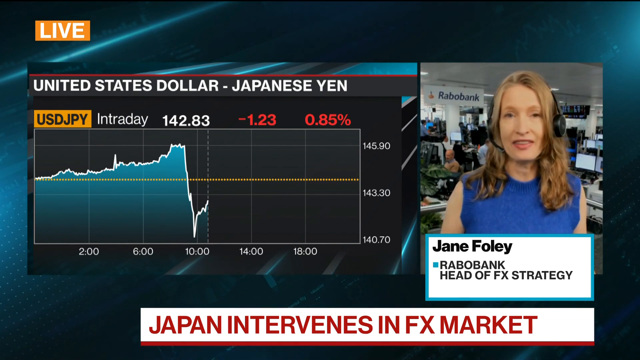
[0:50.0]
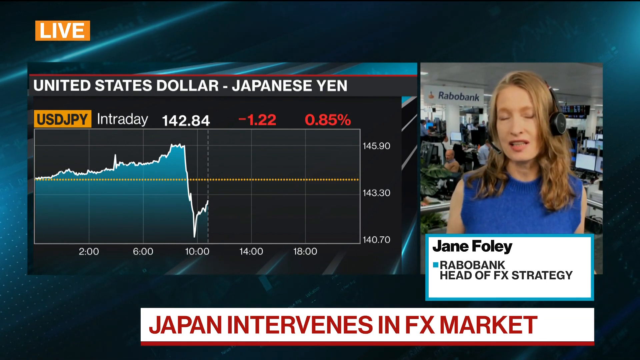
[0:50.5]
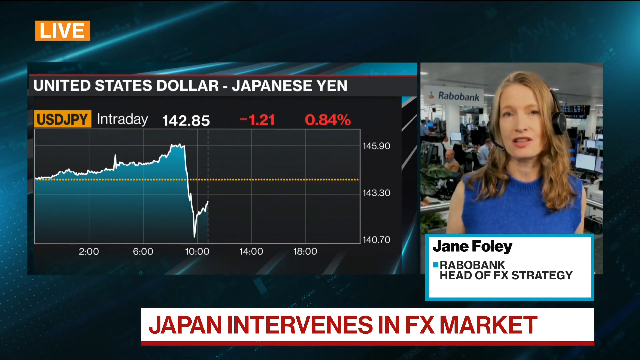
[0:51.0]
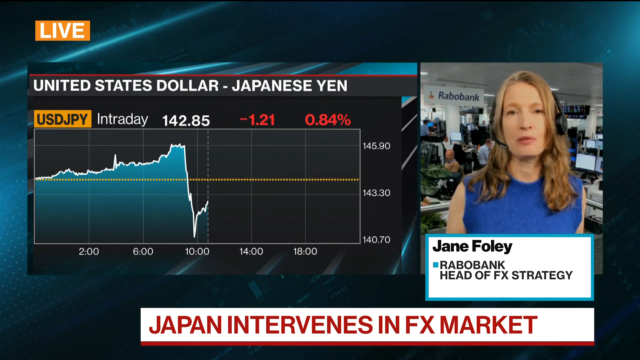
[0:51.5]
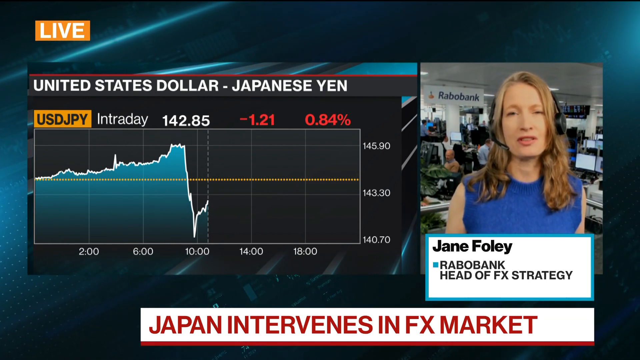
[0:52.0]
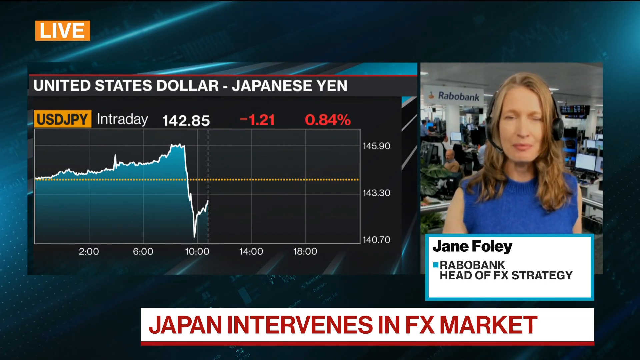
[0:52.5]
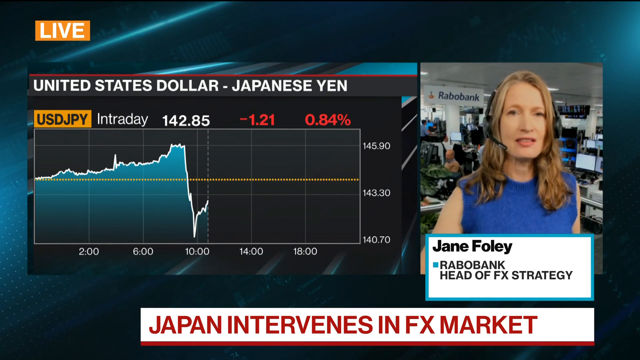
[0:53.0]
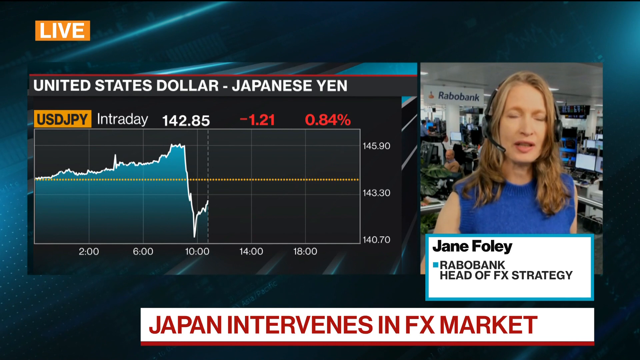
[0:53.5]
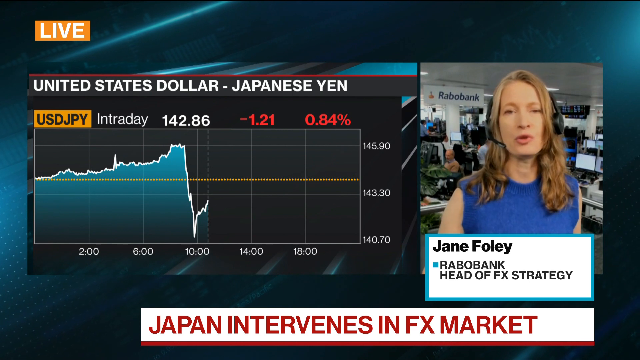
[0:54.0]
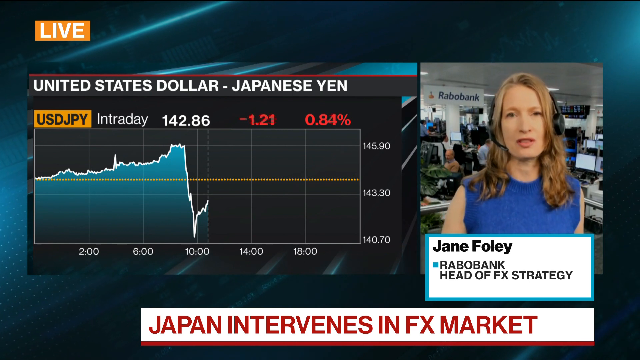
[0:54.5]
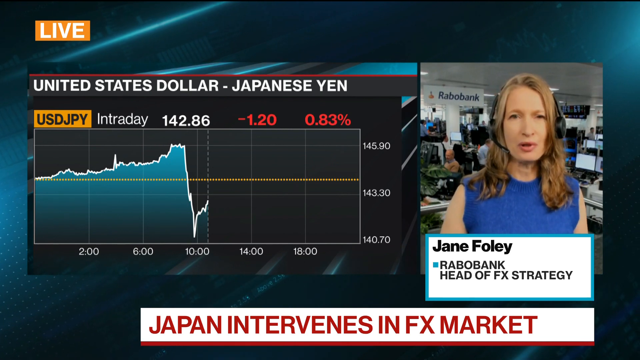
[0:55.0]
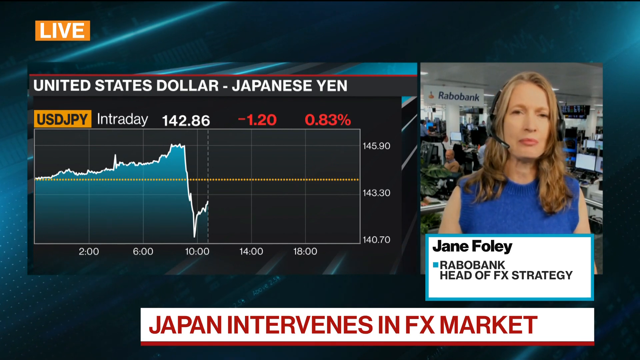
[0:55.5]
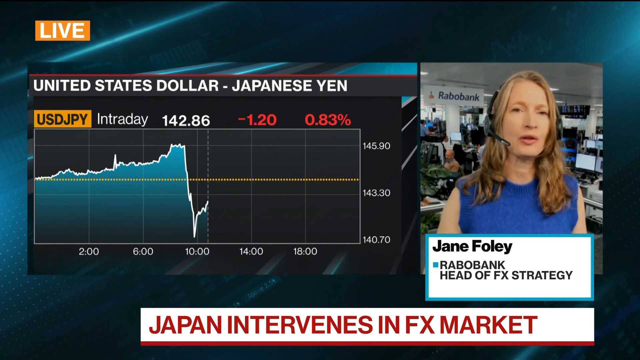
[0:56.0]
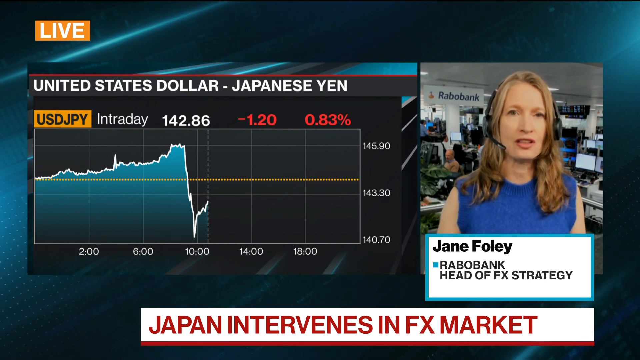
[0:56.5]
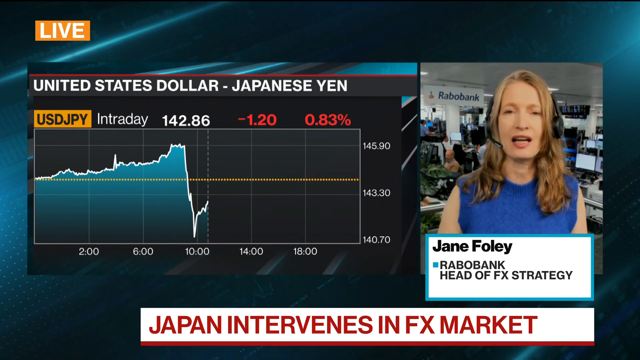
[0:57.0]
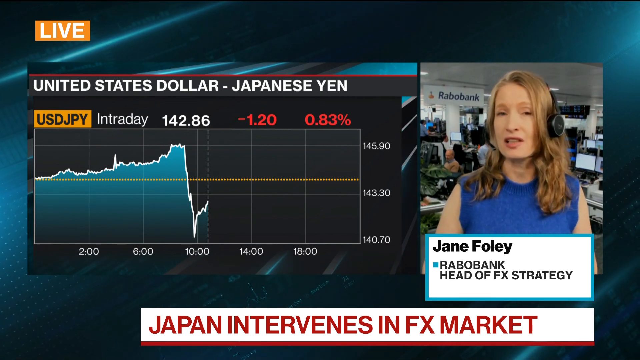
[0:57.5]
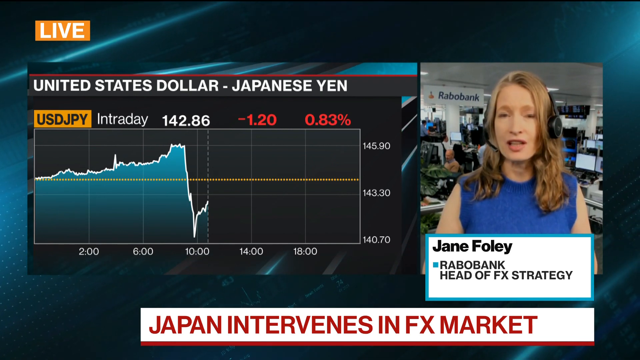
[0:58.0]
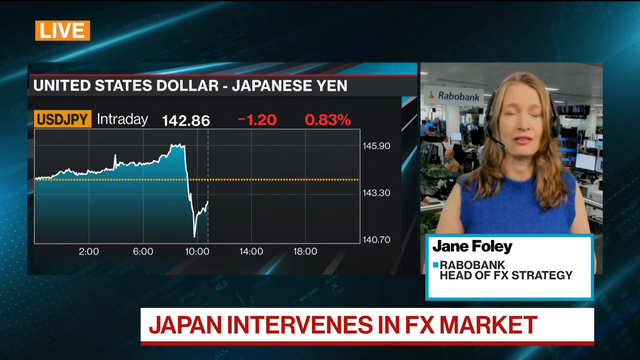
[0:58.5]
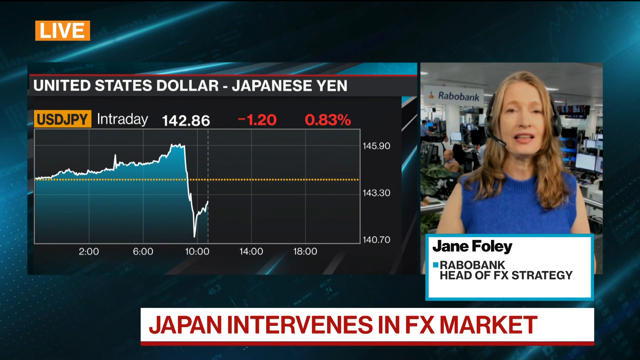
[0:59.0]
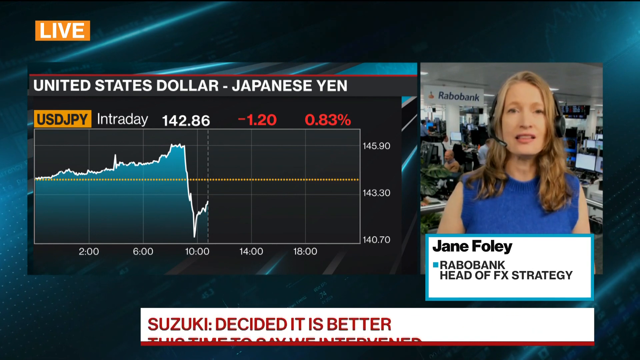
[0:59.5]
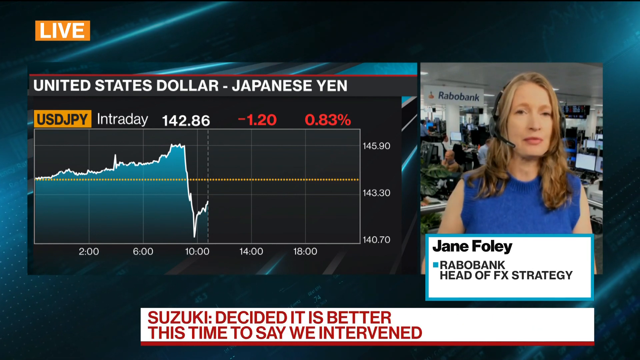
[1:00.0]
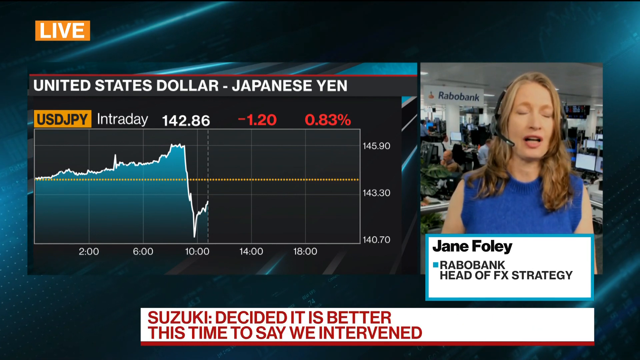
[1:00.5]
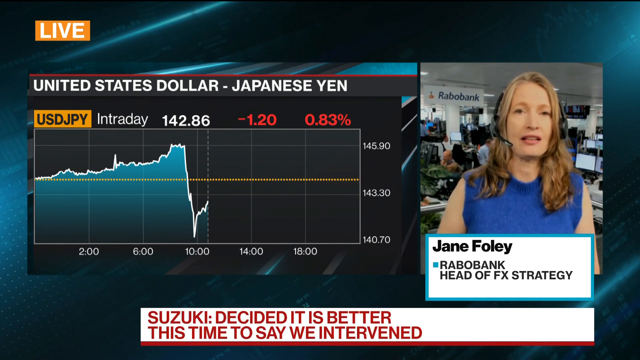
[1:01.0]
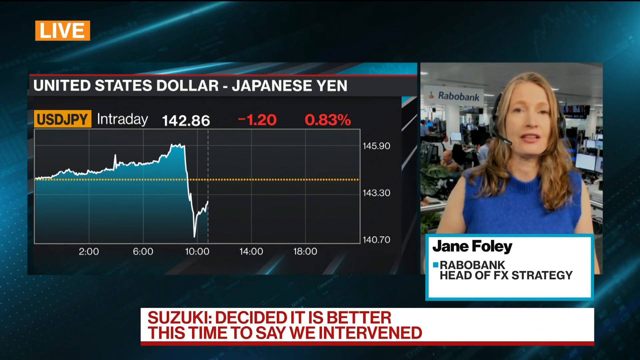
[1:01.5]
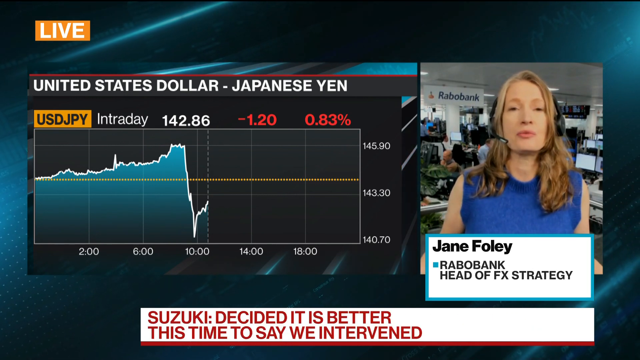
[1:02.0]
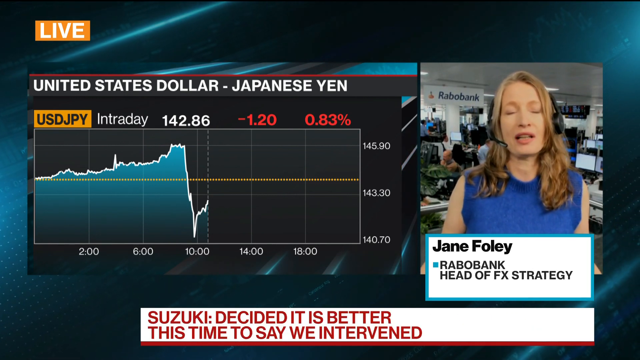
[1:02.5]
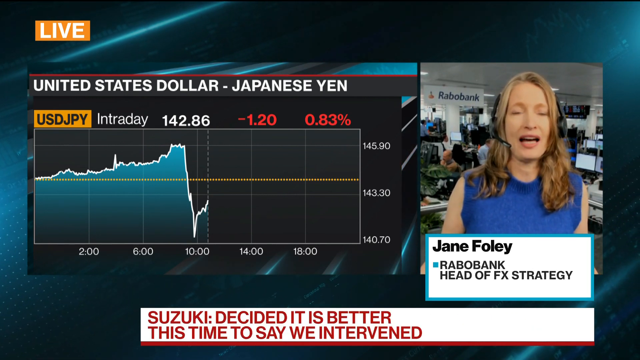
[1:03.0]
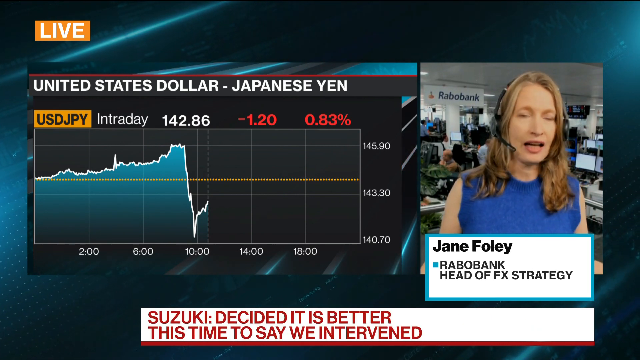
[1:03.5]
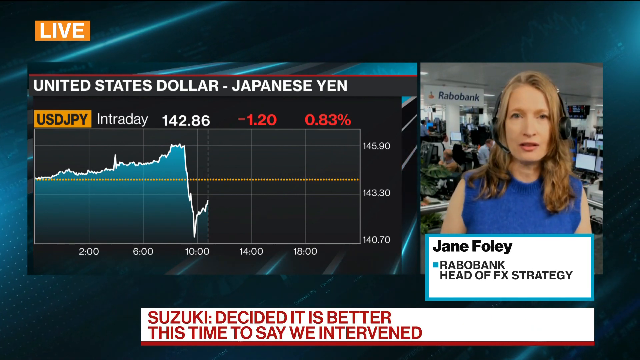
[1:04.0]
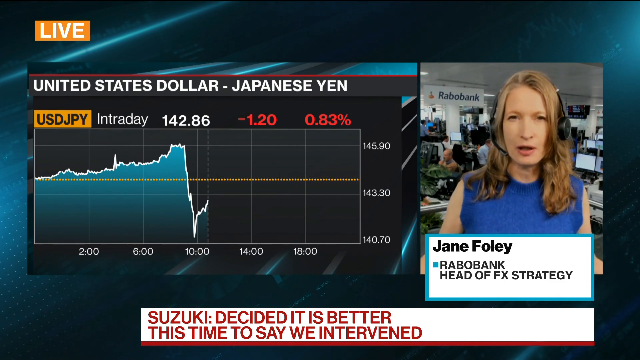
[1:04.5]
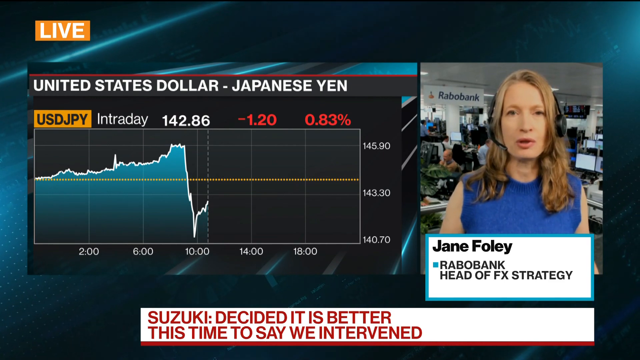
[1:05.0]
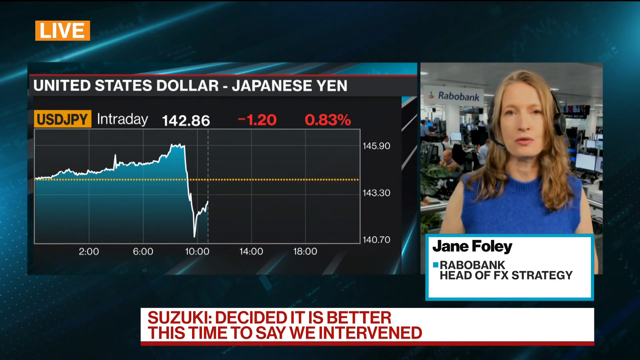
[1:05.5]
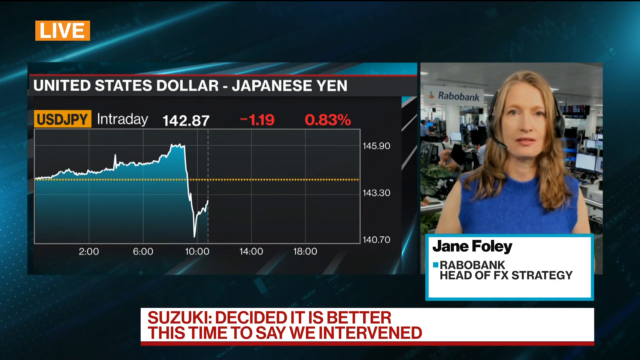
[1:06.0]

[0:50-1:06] The news story begins with a woman who looks to be in her late 30s or early 40s in a box on the right side of the screen. She is wearing a blue dress, and beneath her is a box with her name and title: "Jane Foley, Rabobank Head of FX Strategy". She speaks throughout, quite animatedly, likely about a chart in a box on the left side of the screen. That chart is labeled "United States dollar - Japanese yen"; it is an intraday chart of the United States dollar versus the Japanese yen value, showing a significant decrease in the middle of the chart. At the bottom of the screen is a news ticker reading "Japan intervenes in FX market".